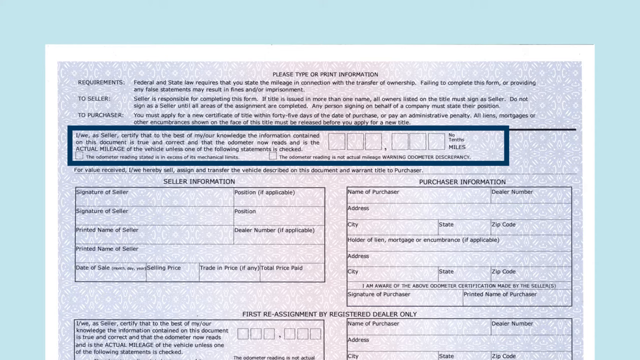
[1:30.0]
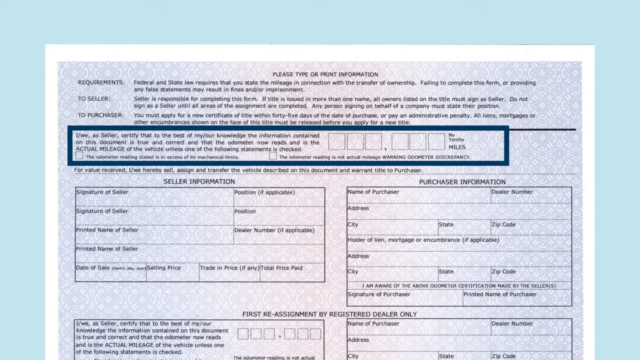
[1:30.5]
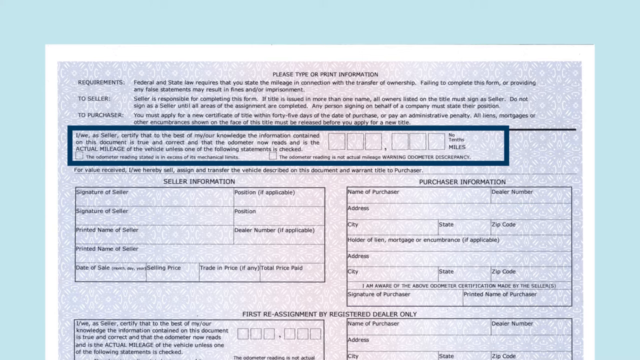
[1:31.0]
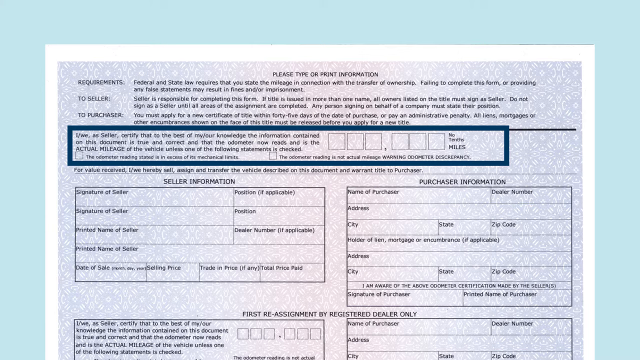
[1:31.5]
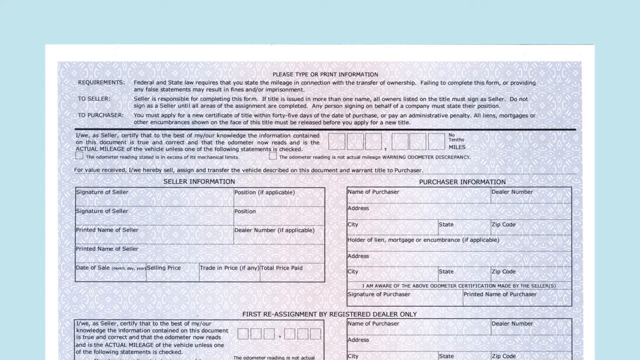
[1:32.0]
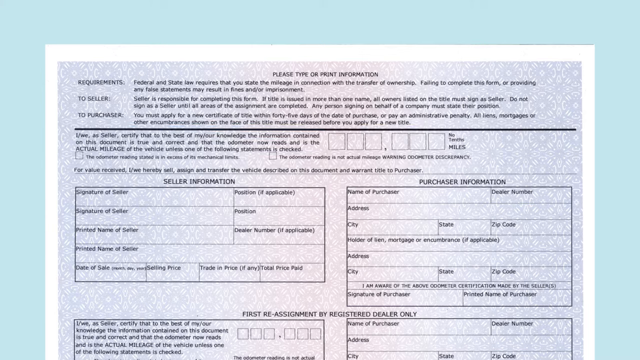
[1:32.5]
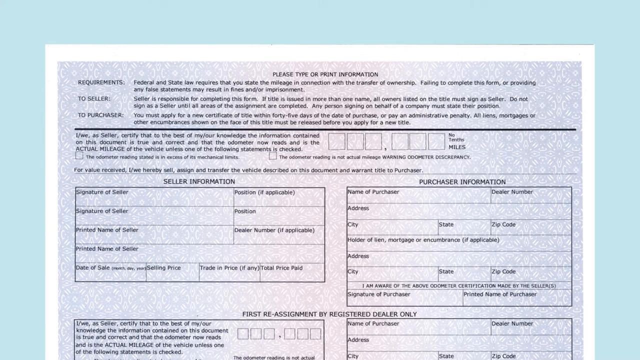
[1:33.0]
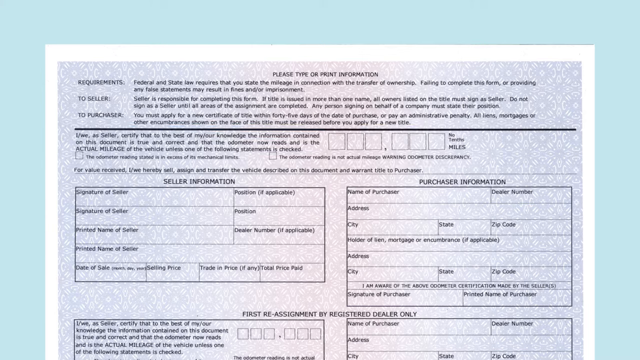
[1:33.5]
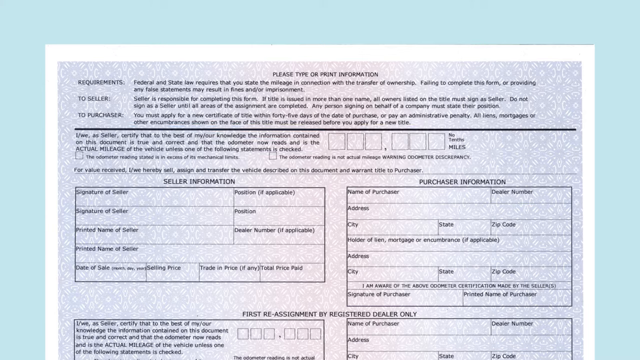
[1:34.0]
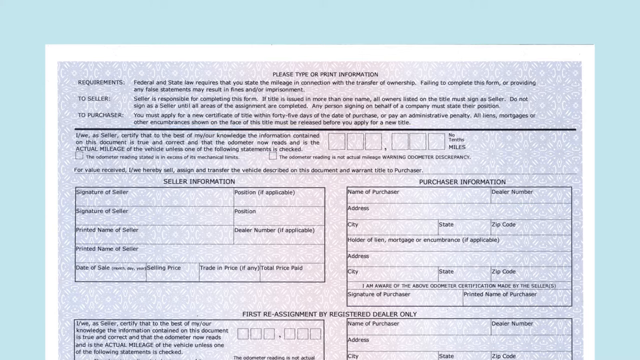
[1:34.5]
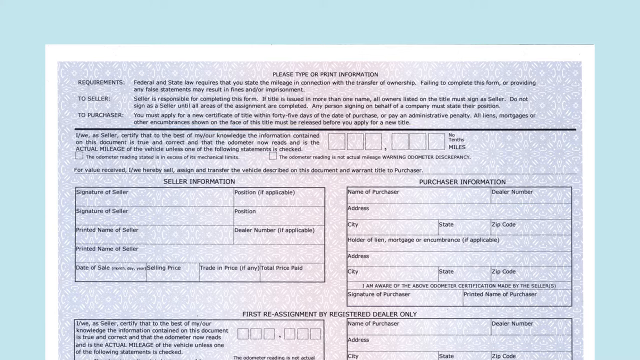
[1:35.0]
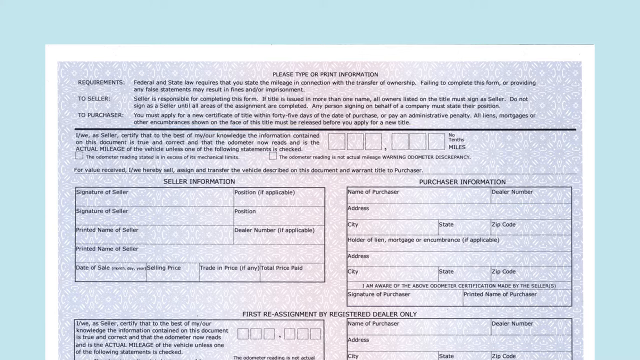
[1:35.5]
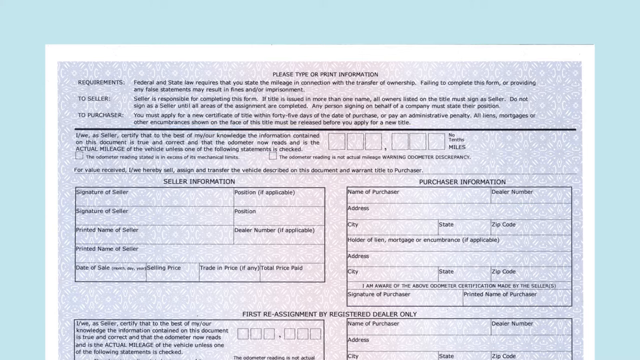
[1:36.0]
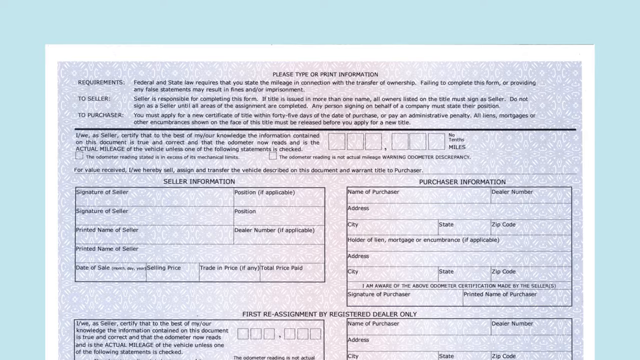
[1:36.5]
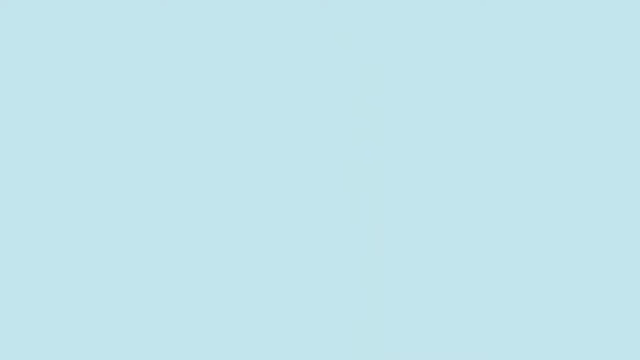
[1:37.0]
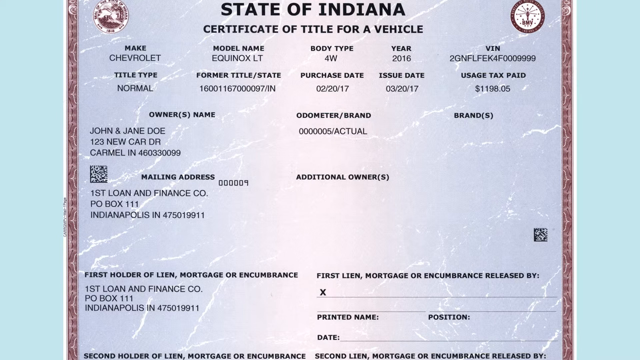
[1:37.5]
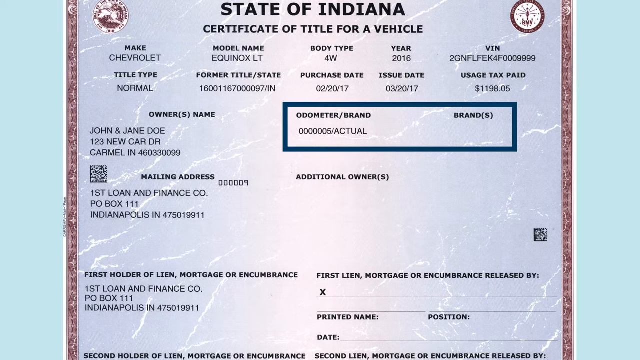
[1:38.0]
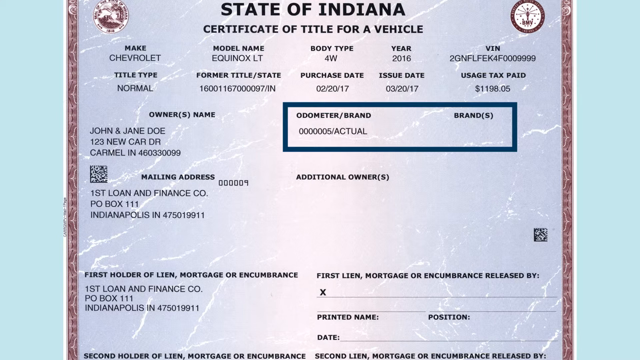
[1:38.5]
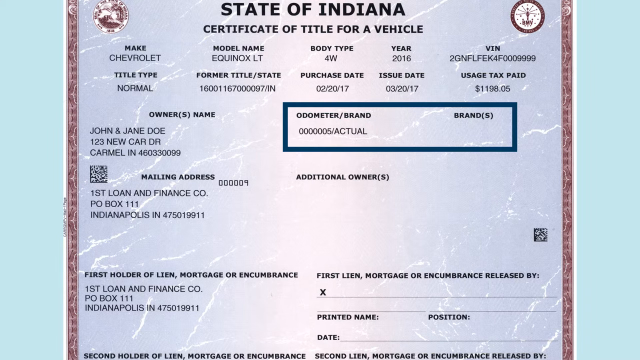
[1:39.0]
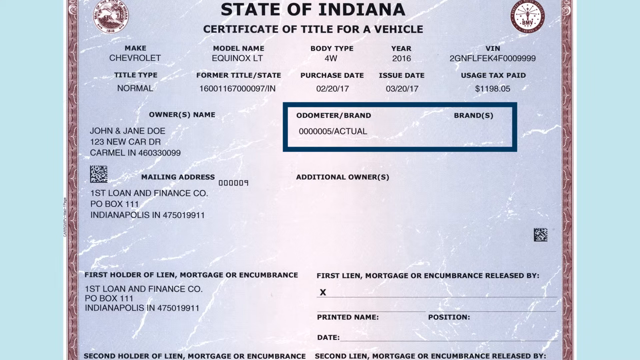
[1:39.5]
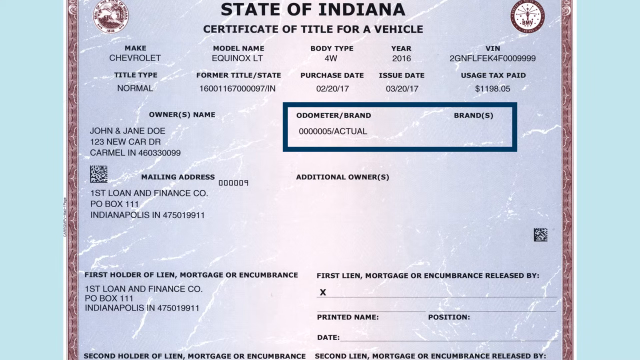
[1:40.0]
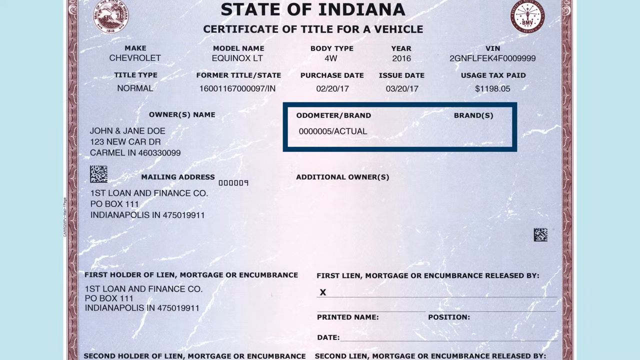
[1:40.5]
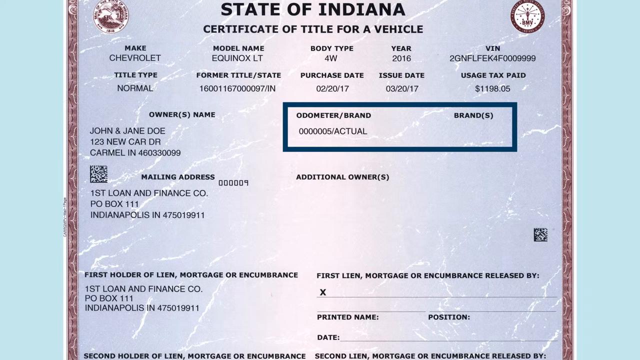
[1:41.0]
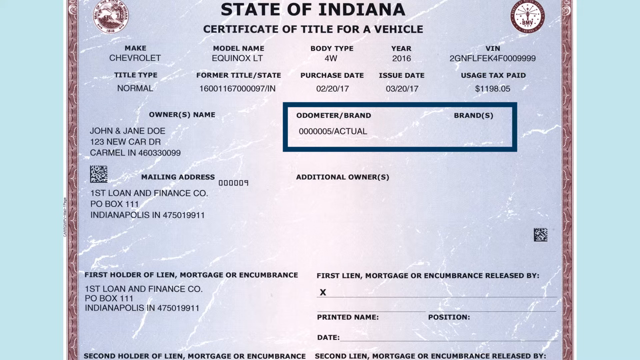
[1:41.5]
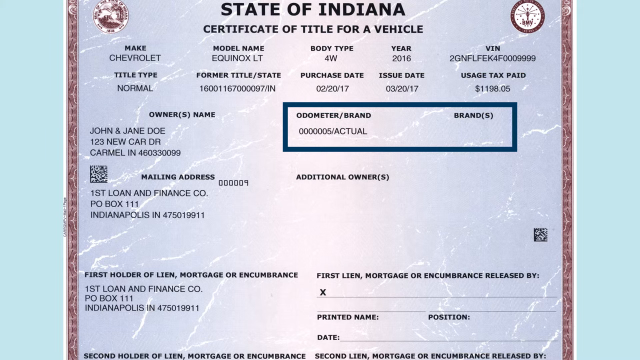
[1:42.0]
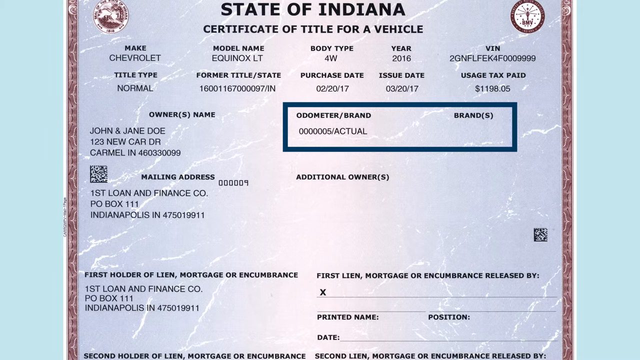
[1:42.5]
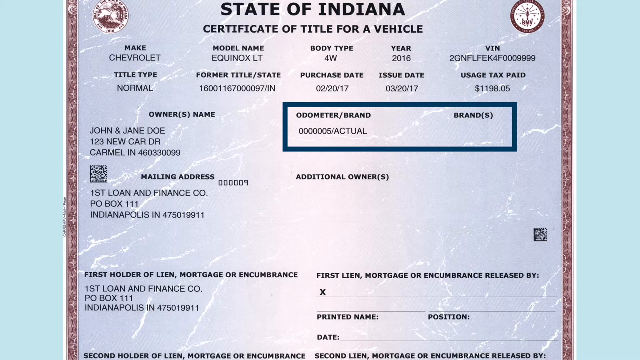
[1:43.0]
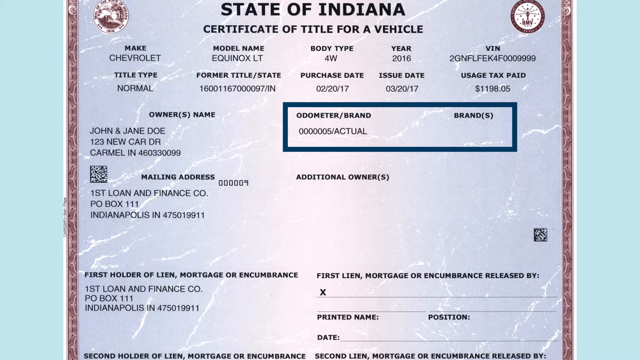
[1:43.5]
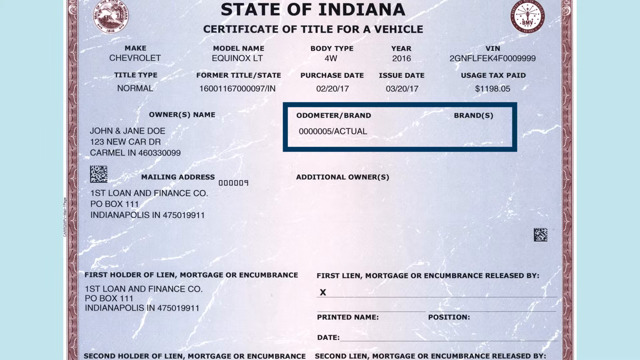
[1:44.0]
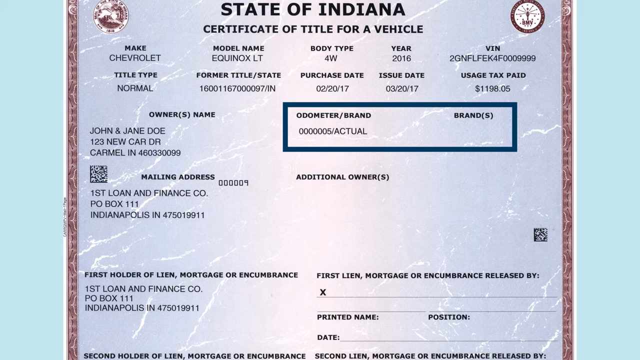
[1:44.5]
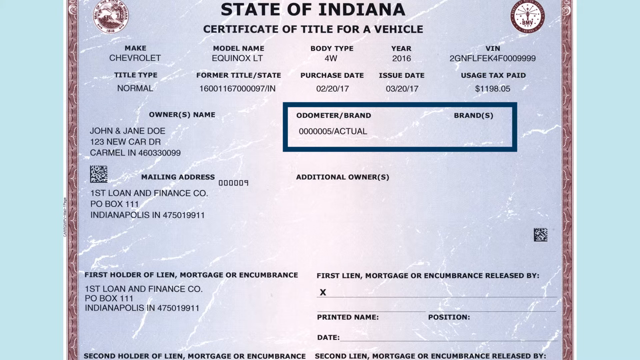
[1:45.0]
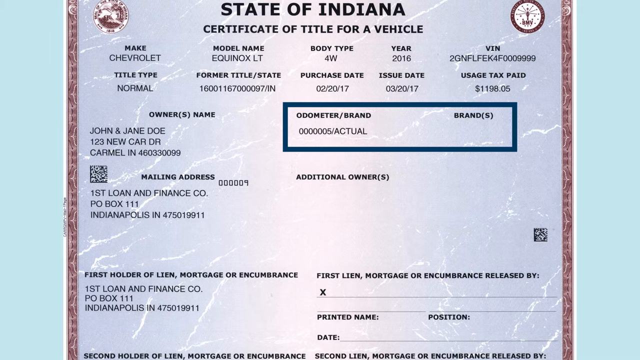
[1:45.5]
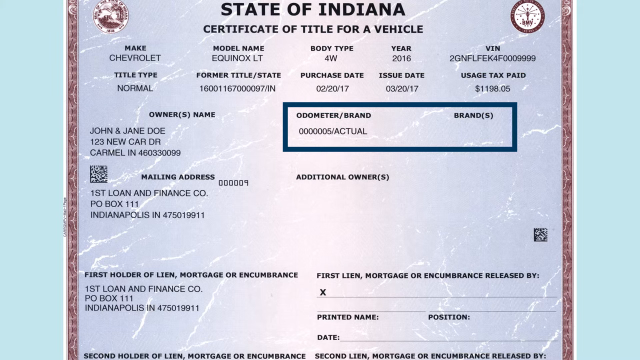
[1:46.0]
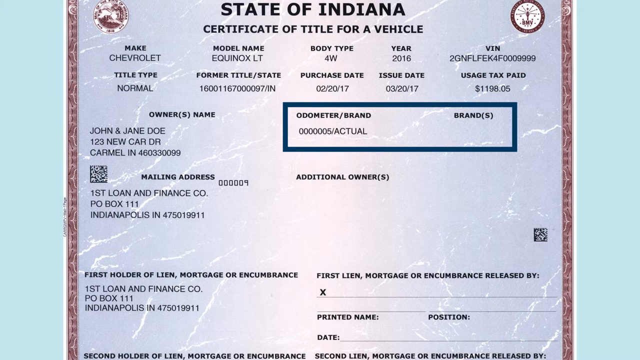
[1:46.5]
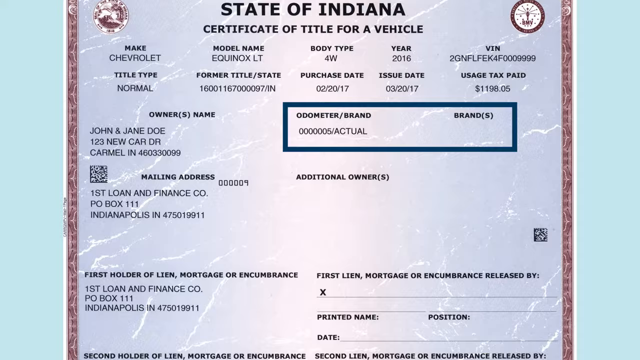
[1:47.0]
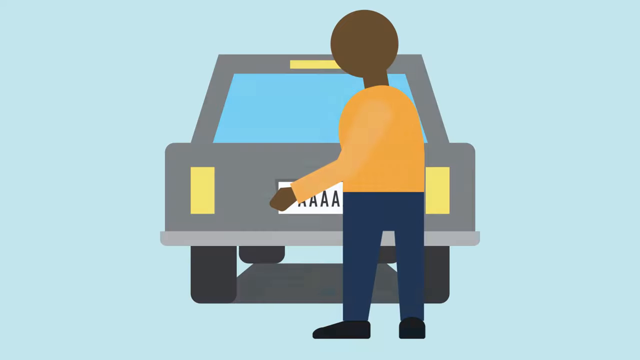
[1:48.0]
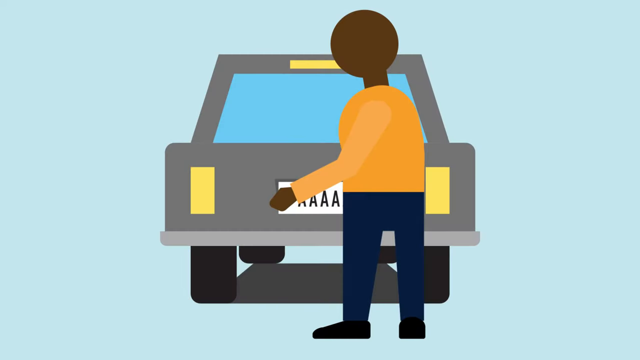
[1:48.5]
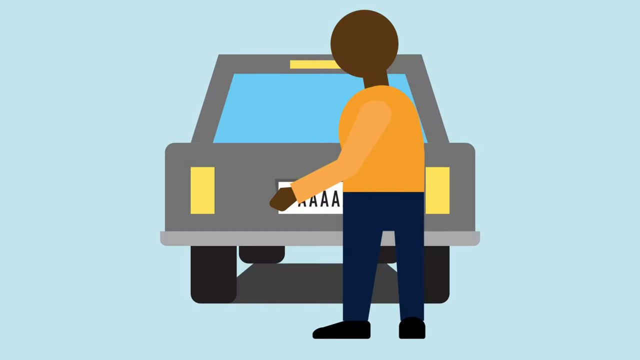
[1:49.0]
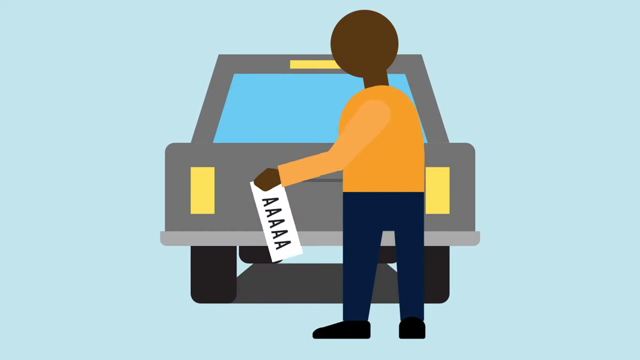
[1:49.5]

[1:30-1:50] The seller certification area of the back of the lien document, beginning "I, we, the seller certify", is highlighted with a dark blue outline. The view then shows the front of the document, with the state of Indiana written at the top; it is a certificate of title for a vehicle. The odometer and brand area is highlighted with a dark blue circle. The scene then changes to the man seen near the beginning of the video, outside behind his car, holding a license plate in his hand, and he places the license plate on the back of his vehicle.